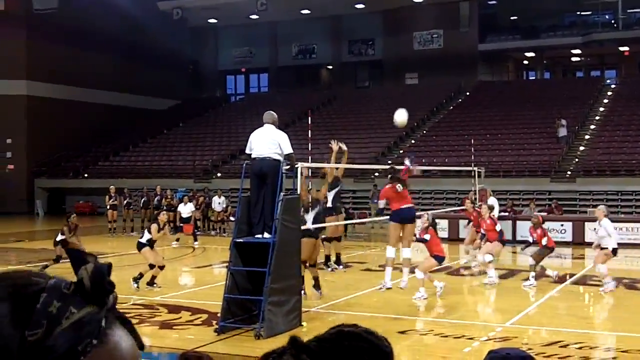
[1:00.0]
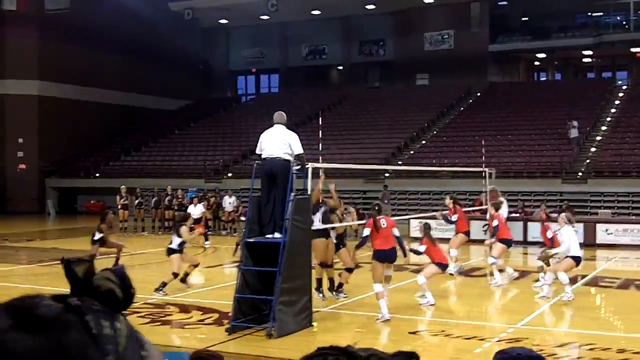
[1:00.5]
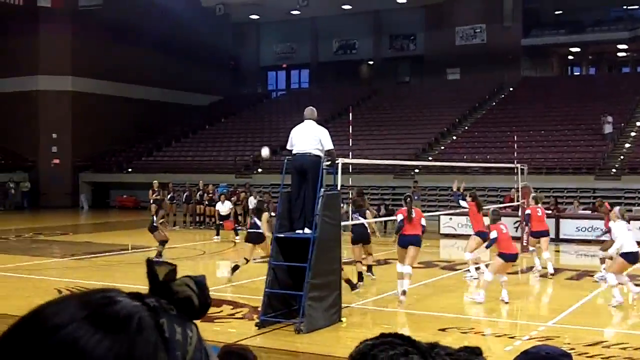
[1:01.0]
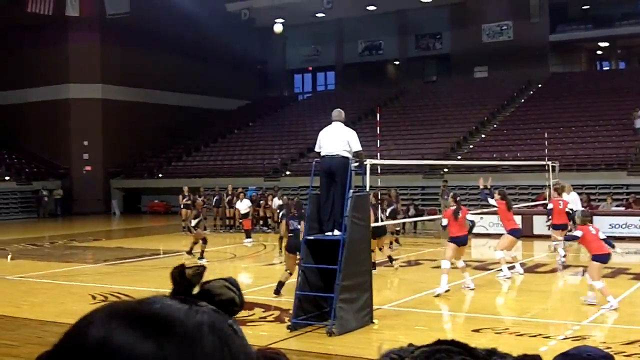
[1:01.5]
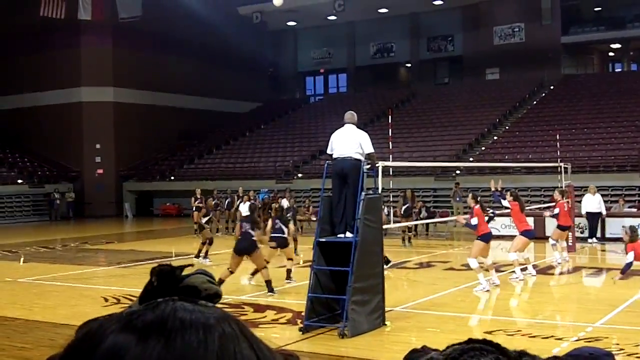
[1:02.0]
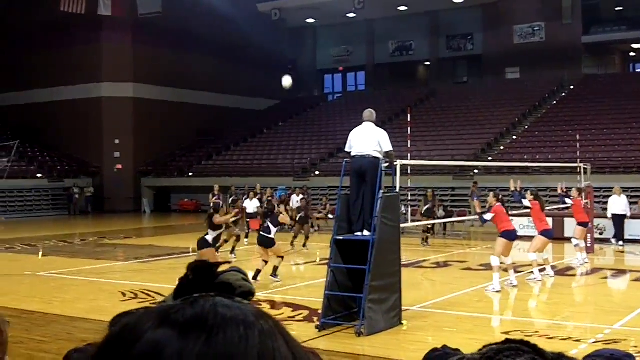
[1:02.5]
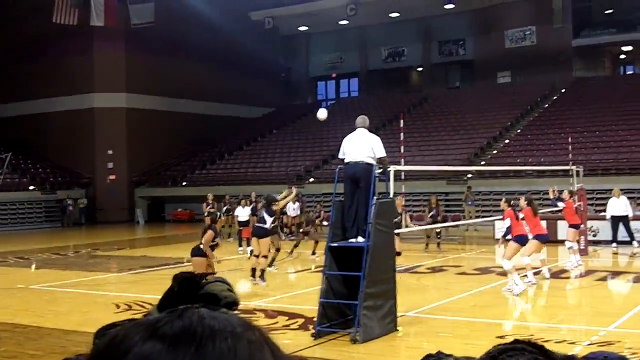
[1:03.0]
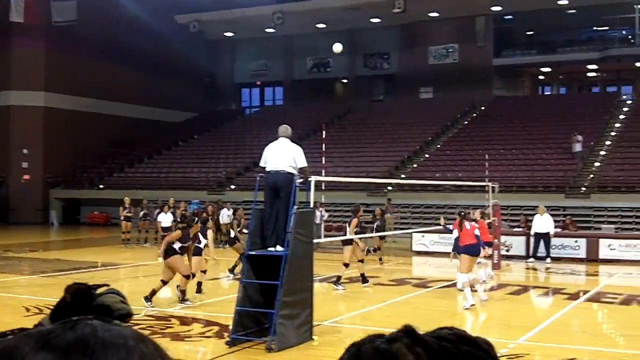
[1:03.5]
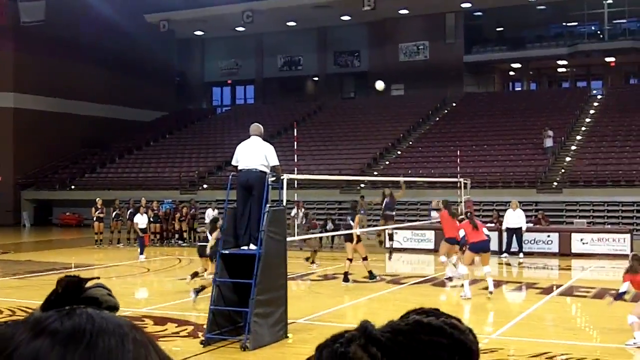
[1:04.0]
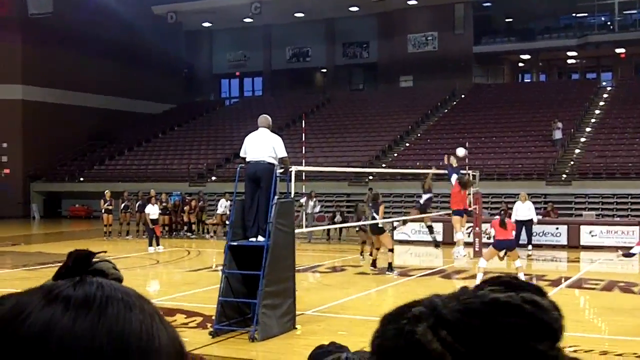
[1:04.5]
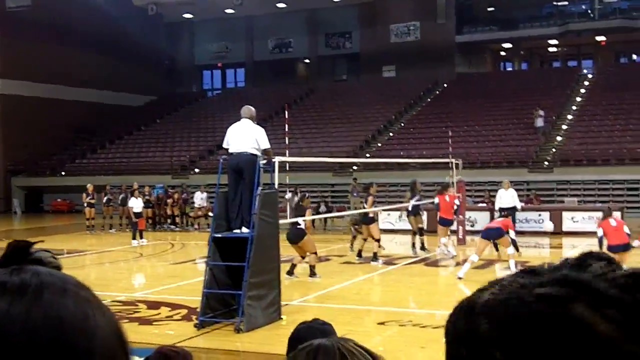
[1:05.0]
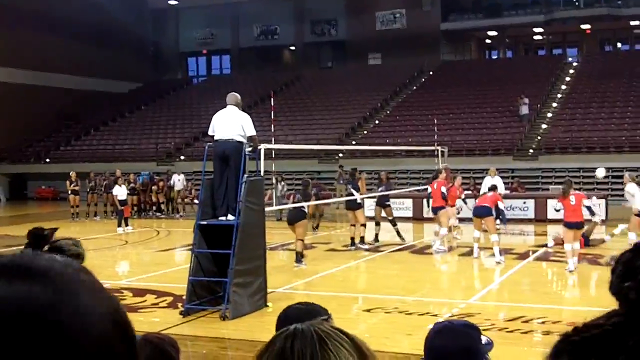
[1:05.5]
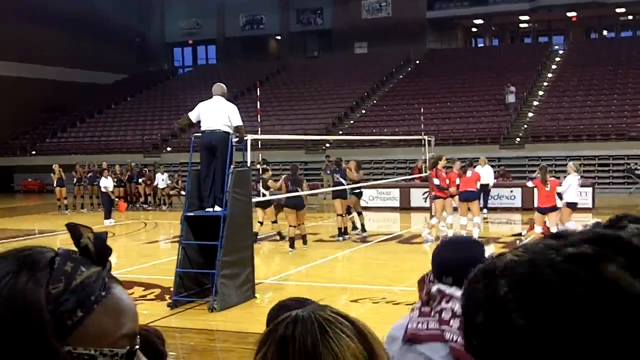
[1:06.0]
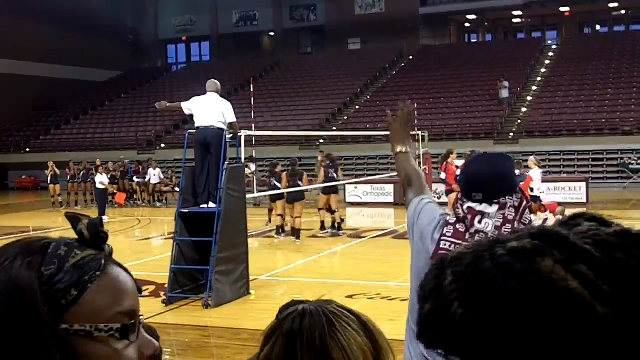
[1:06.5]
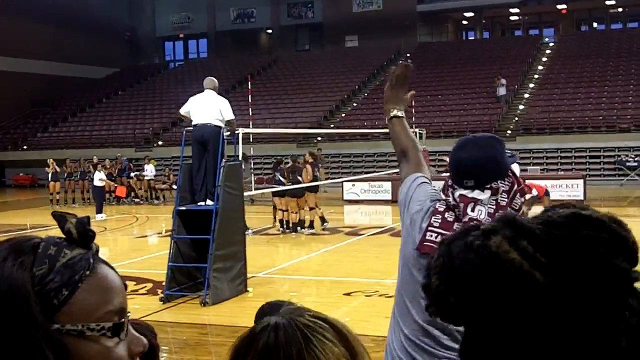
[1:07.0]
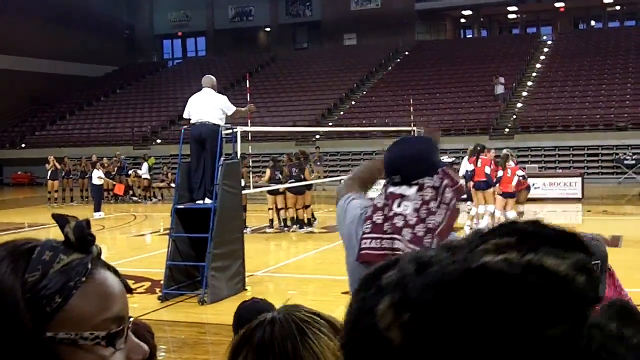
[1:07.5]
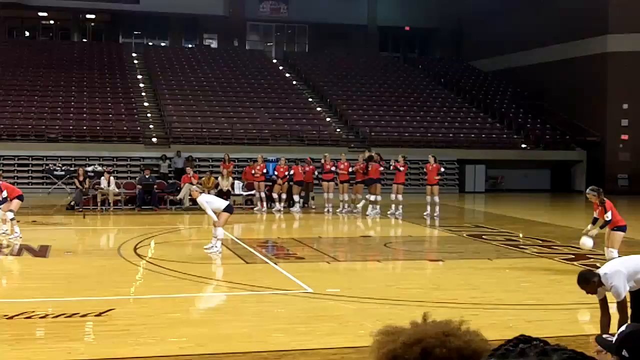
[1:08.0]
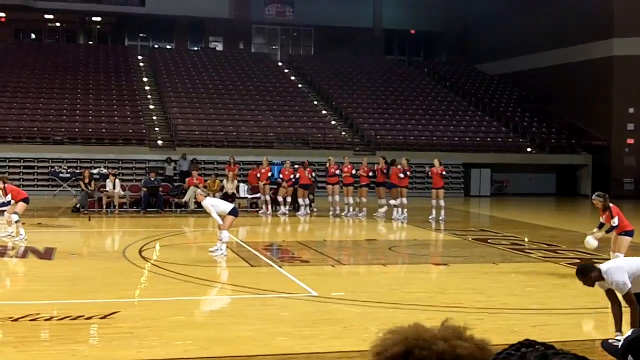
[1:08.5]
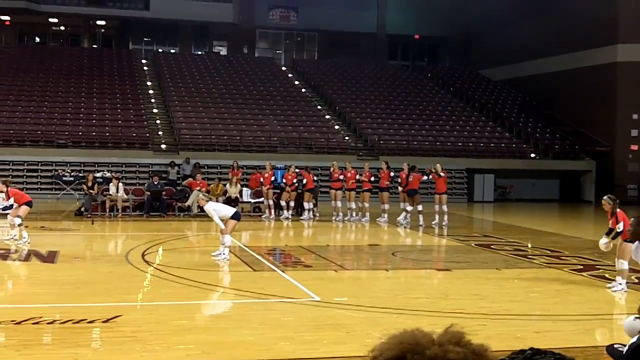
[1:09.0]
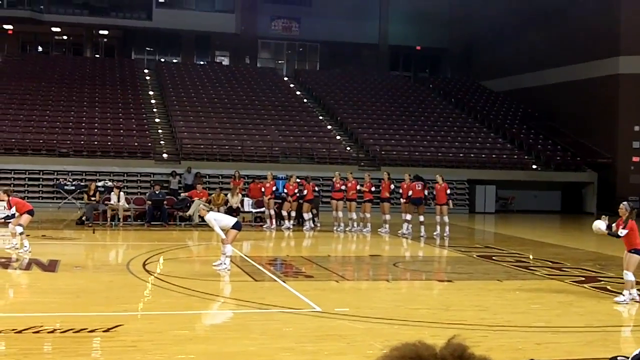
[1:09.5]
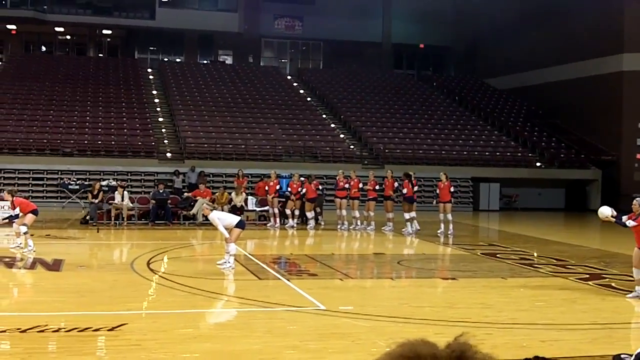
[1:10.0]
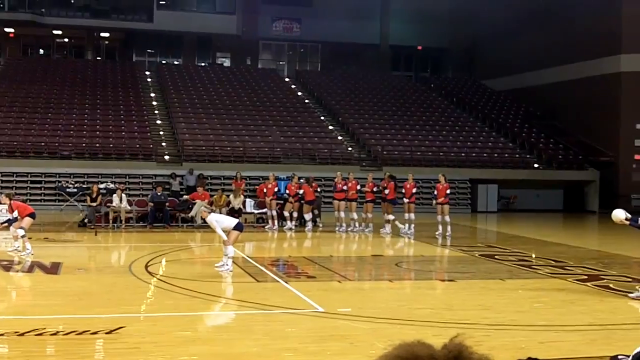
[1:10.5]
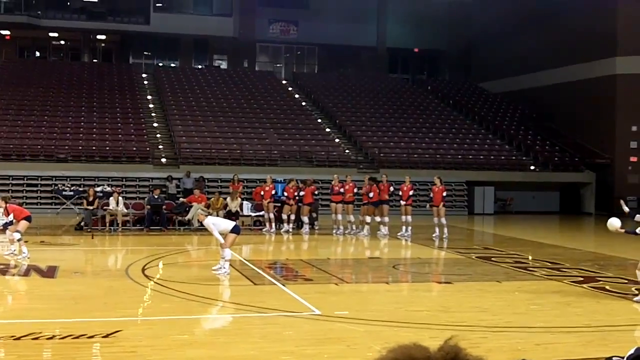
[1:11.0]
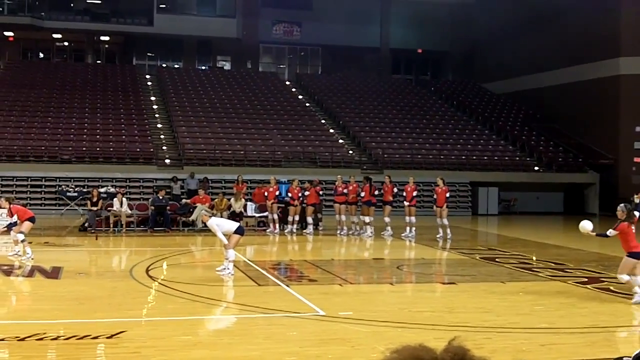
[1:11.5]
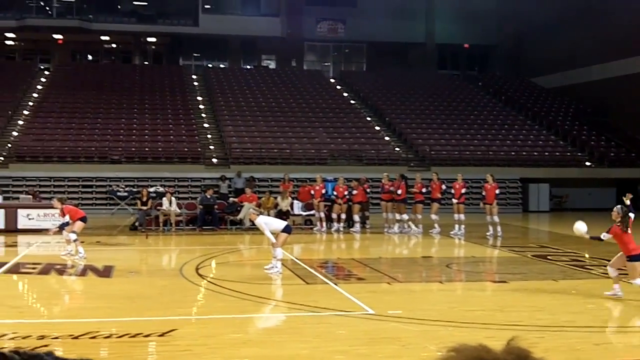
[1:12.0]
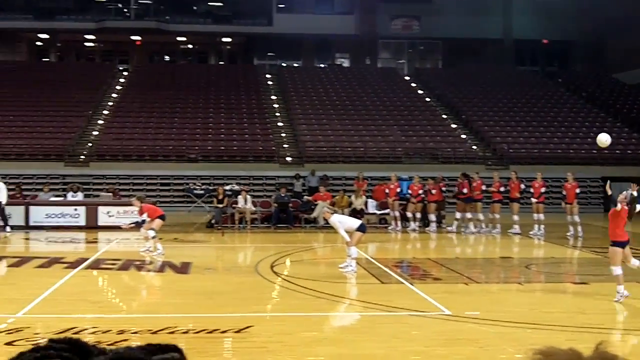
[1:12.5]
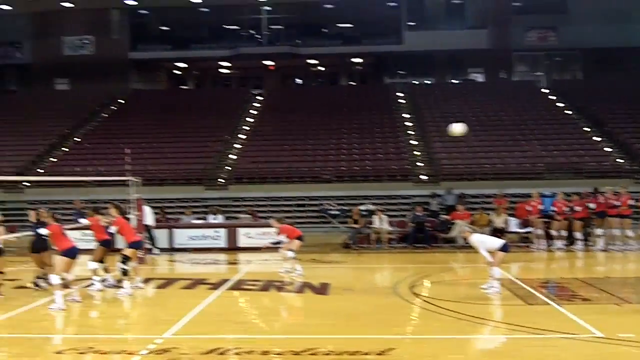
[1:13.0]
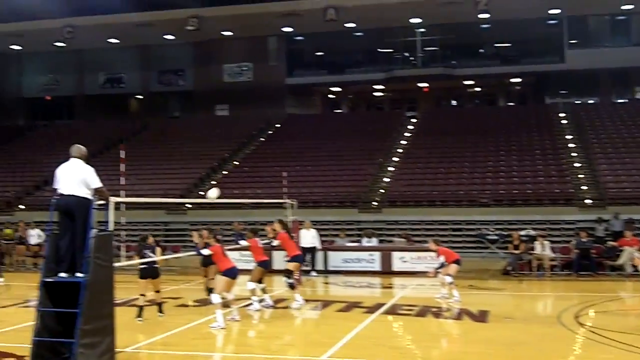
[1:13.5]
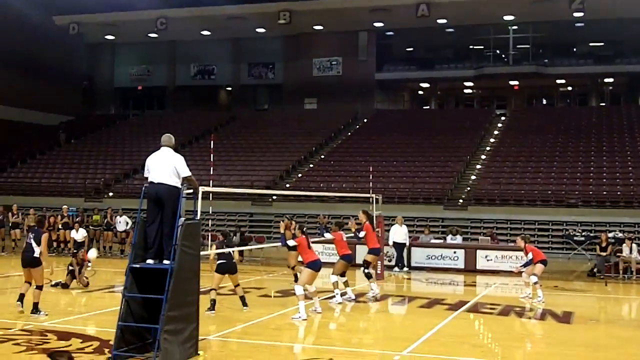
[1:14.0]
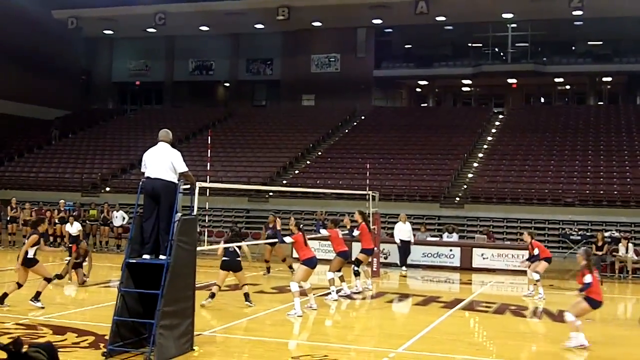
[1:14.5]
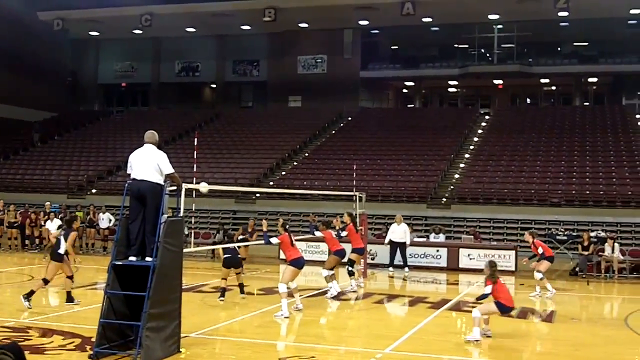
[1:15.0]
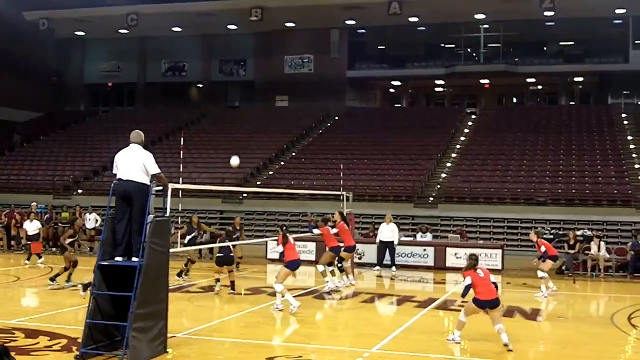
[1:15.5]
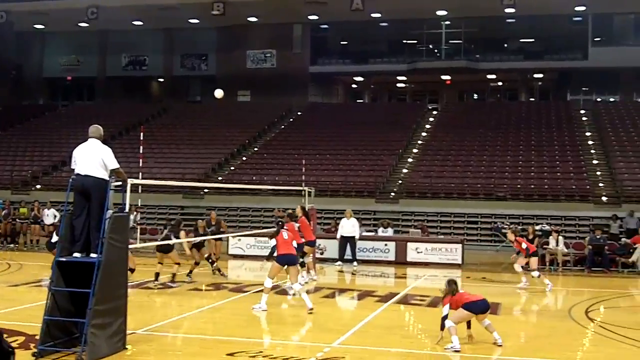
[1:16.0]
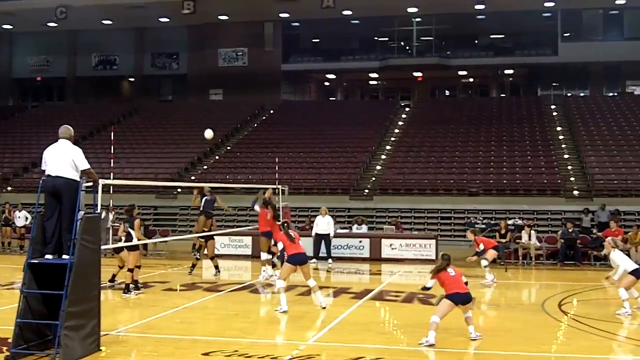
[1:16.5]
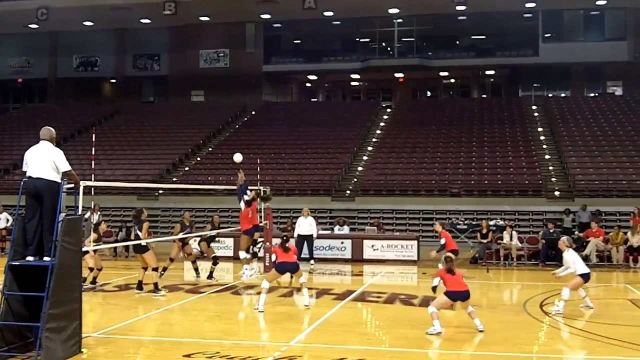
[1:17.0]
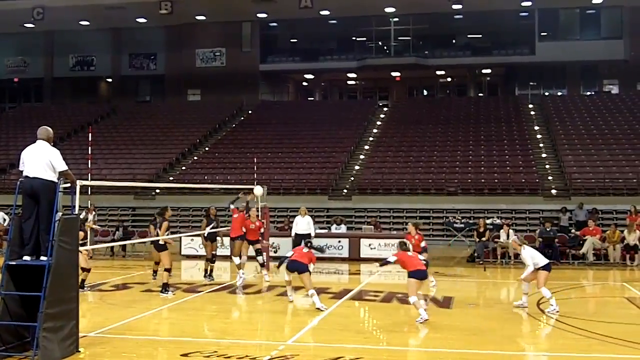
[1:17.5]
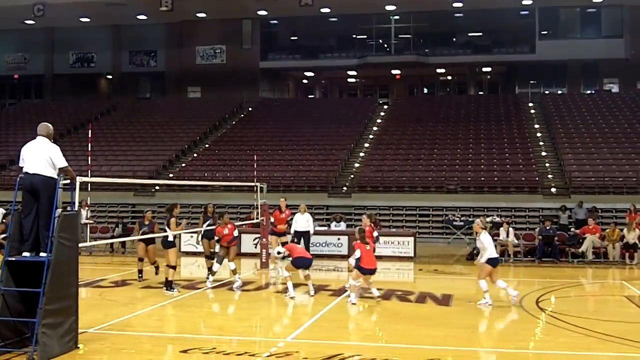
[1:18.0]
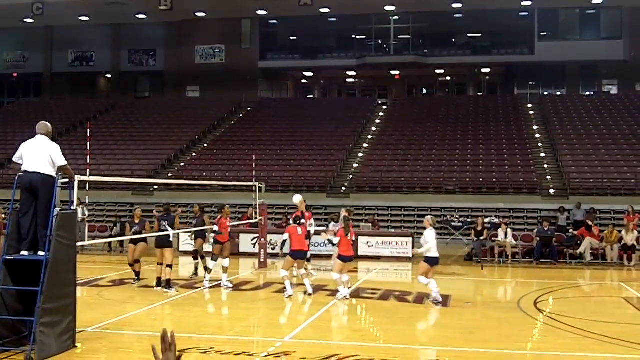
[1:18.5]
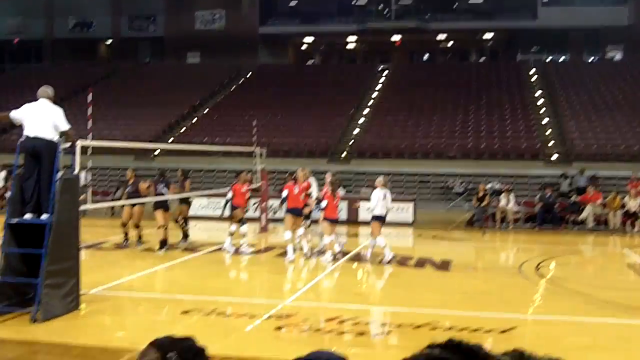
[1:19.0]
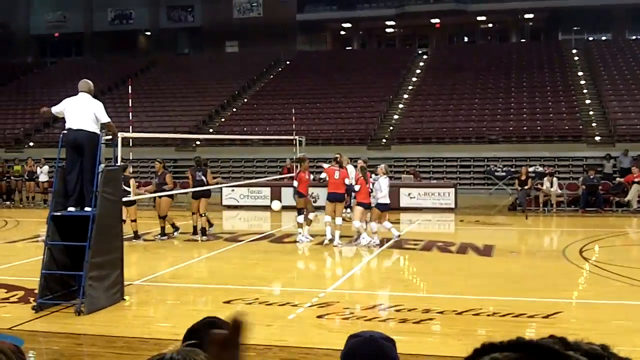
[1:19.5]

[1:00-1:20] A women's volleyball game, apparently at the college level, continues as a red-shirt team and a black-shirt team hit the ball back and forth over the net. The black team seems to be dominant and keeps scoring. A referee walks up some stairs, holding on to the railing, and stands on a podium. Spectators watch with their backs closest to the camera; when the black team scores, they stand up, cheer, walk a little onto the court to celebrate, and then sit back down. One audience member who stands up has a purple and white kerchief coming out of his baseball cap, hanging down and covering the back of his neck and hair. Members of each team who are not playing watch from the sideline. The black team continues to score. A red team player serves the ball, and it is hit back.